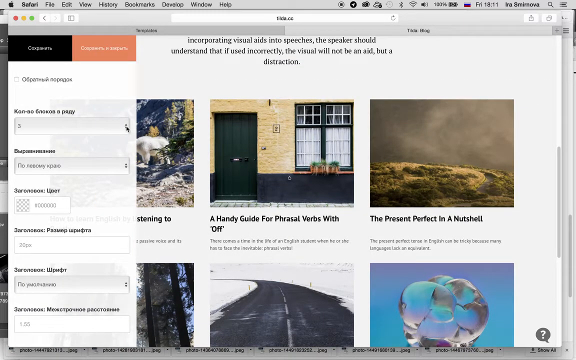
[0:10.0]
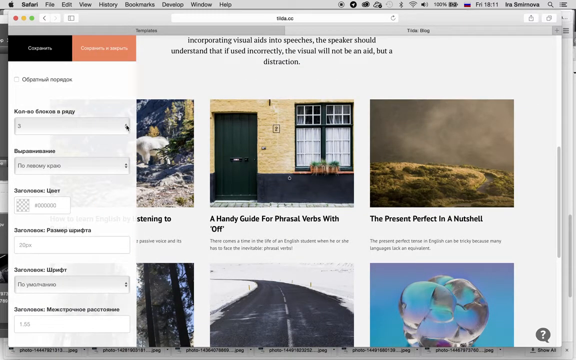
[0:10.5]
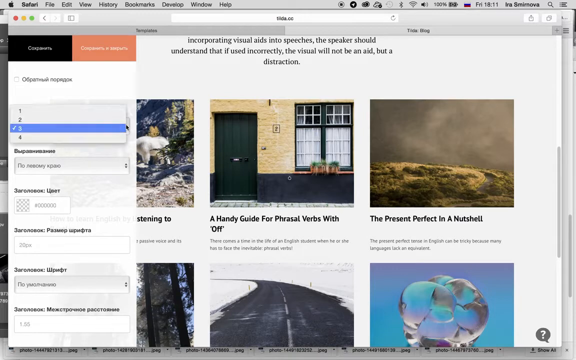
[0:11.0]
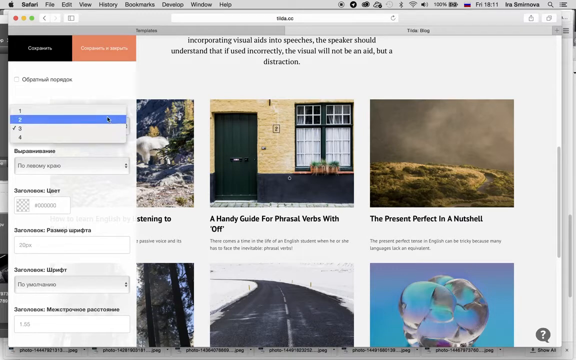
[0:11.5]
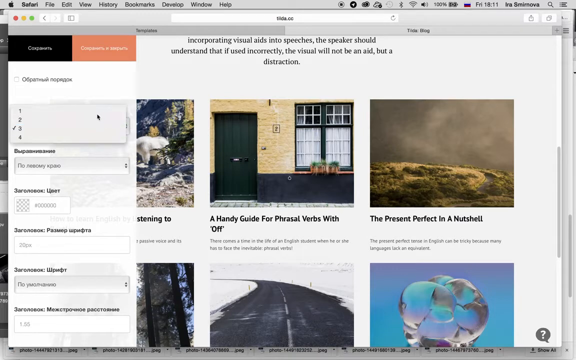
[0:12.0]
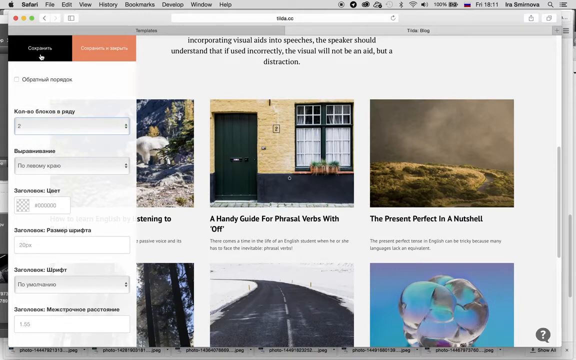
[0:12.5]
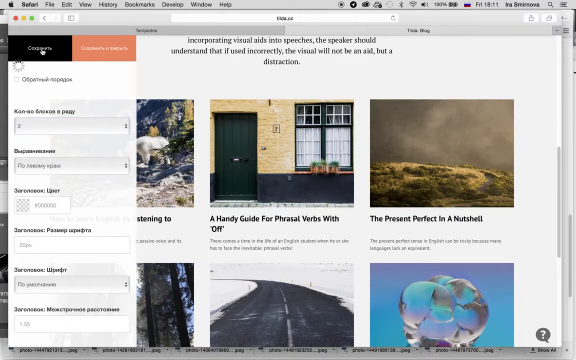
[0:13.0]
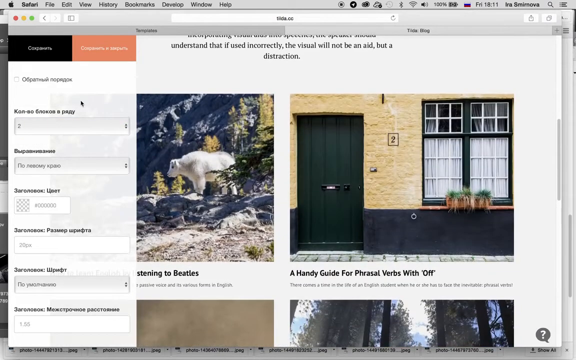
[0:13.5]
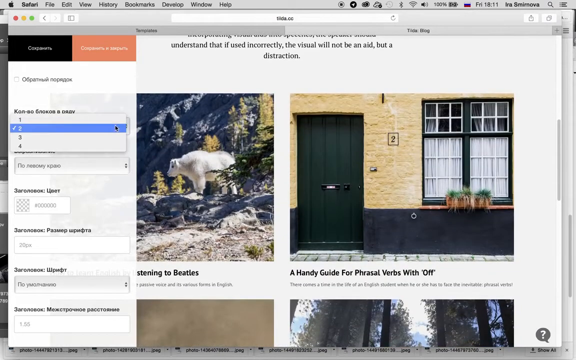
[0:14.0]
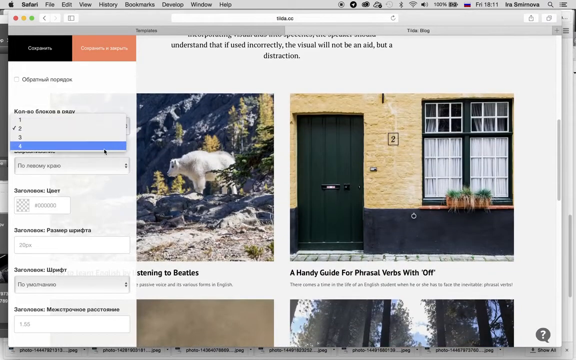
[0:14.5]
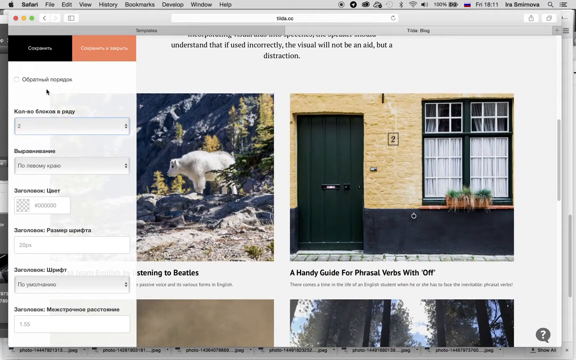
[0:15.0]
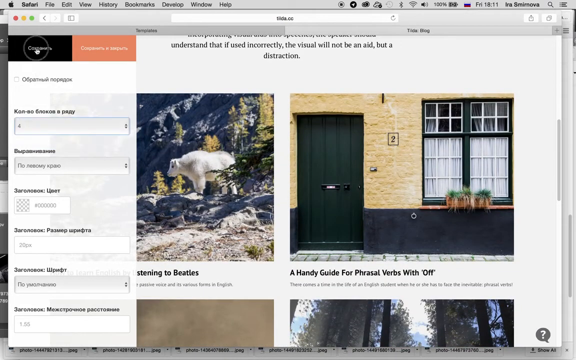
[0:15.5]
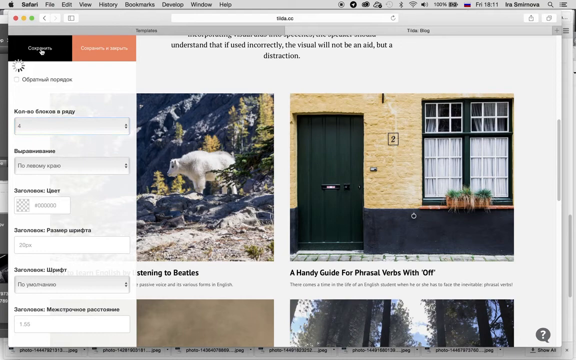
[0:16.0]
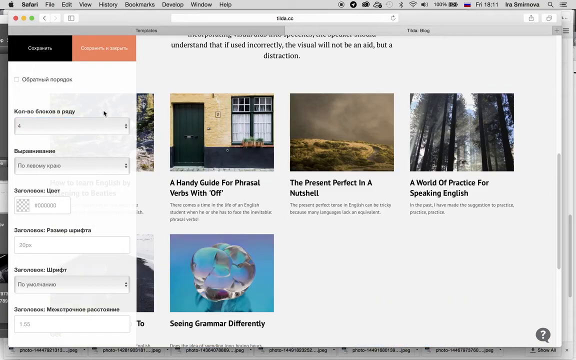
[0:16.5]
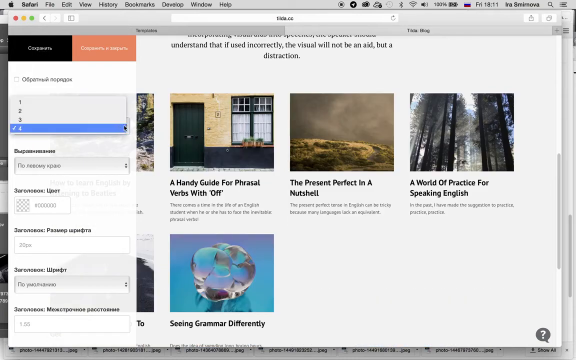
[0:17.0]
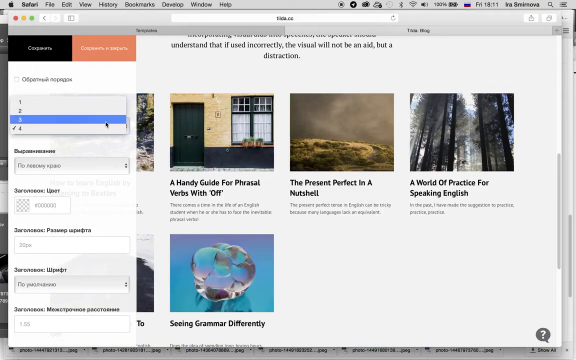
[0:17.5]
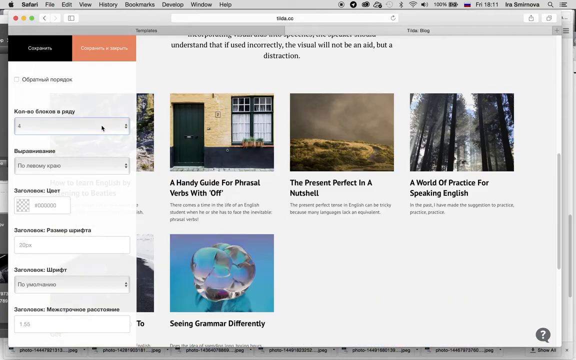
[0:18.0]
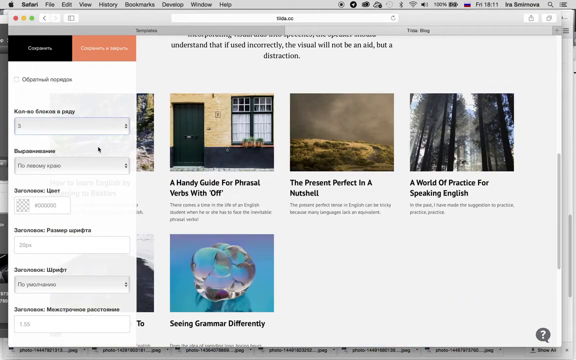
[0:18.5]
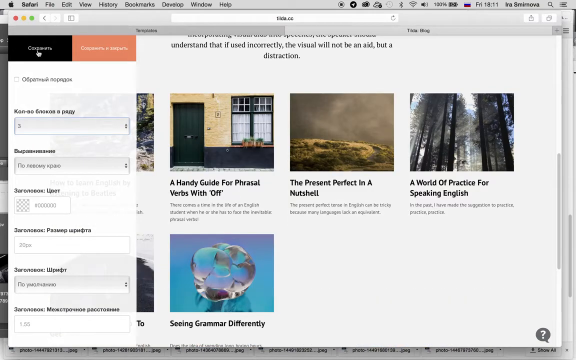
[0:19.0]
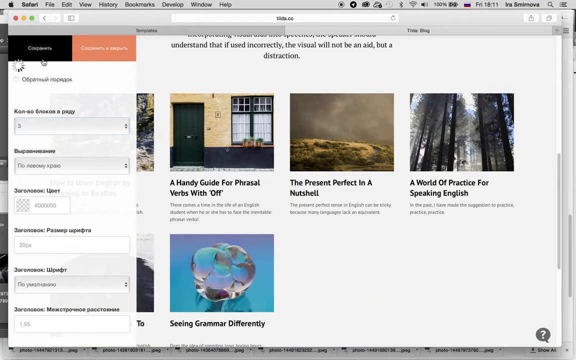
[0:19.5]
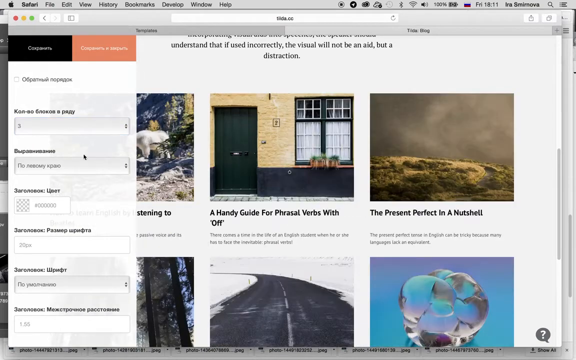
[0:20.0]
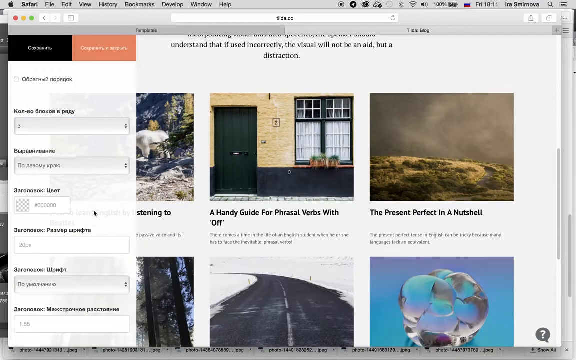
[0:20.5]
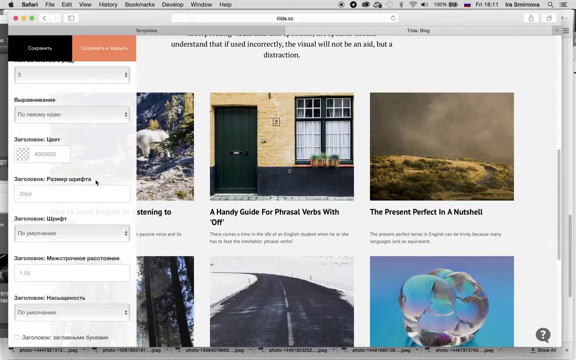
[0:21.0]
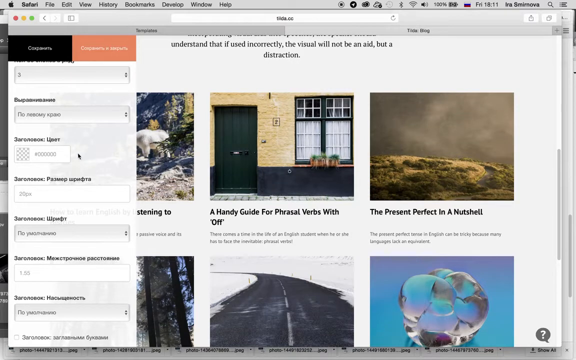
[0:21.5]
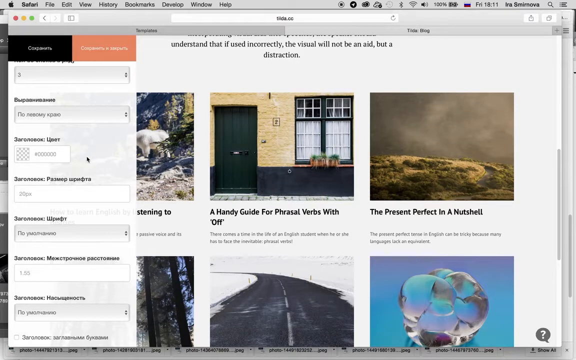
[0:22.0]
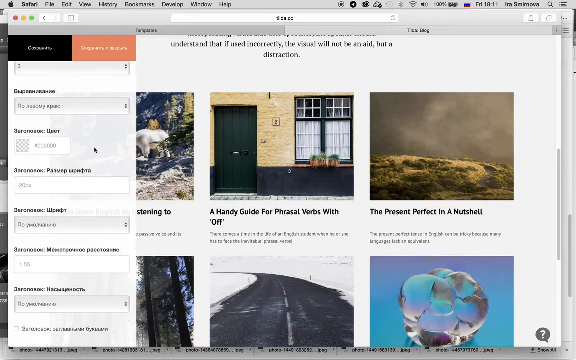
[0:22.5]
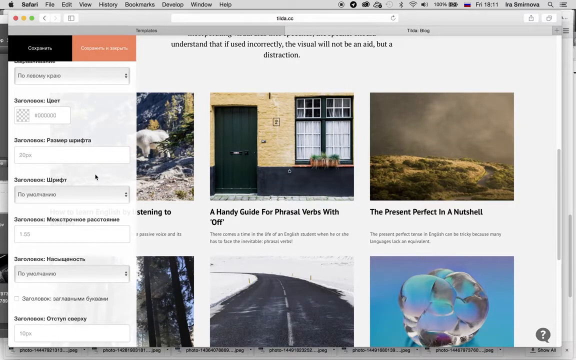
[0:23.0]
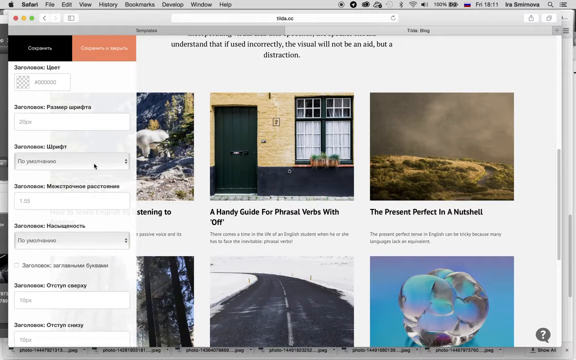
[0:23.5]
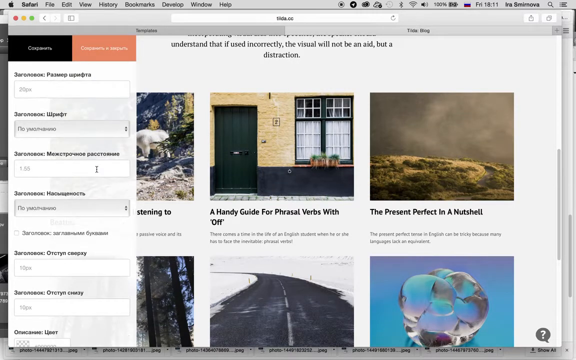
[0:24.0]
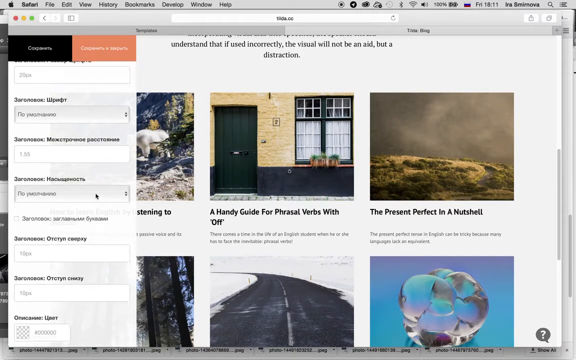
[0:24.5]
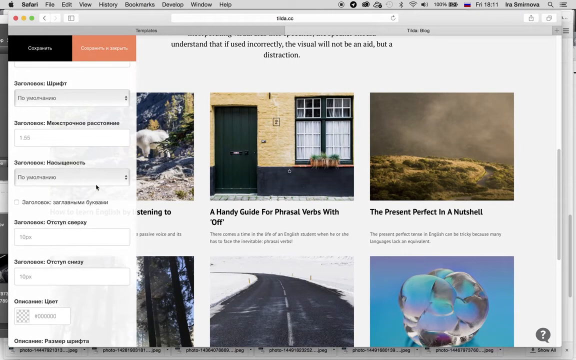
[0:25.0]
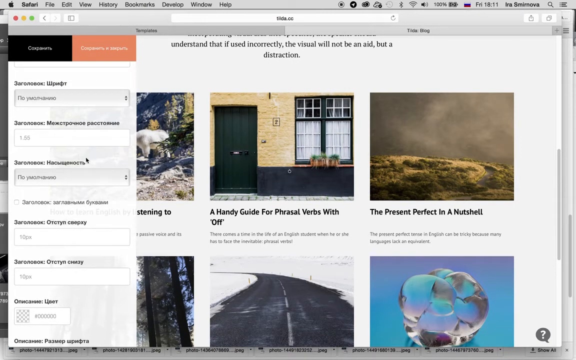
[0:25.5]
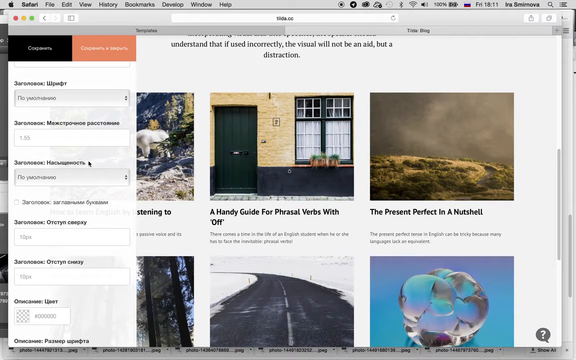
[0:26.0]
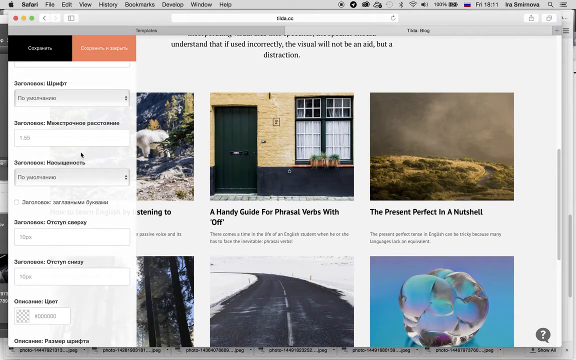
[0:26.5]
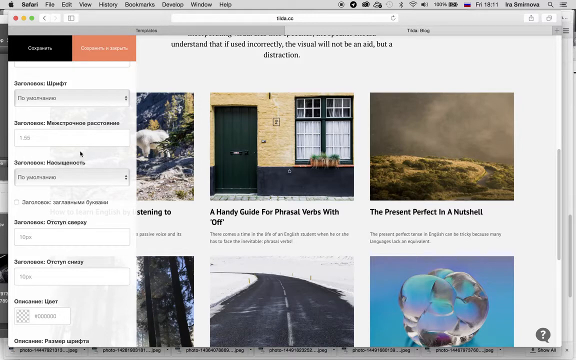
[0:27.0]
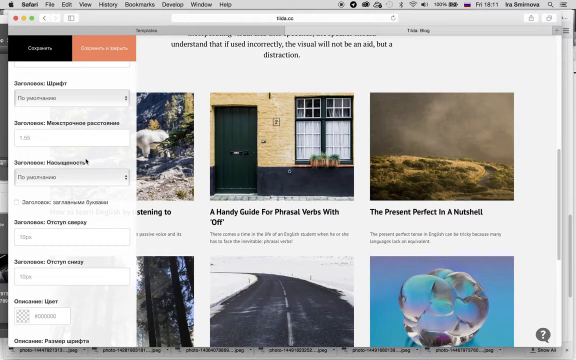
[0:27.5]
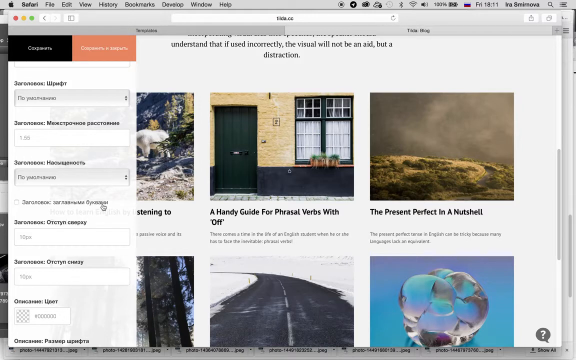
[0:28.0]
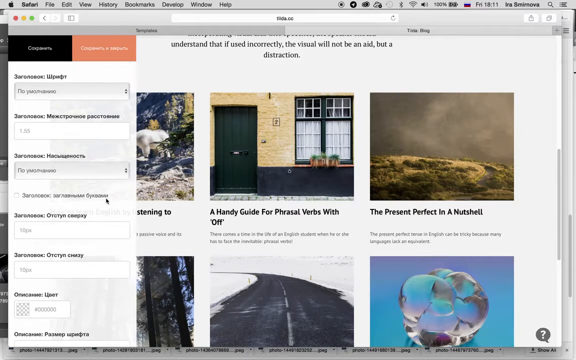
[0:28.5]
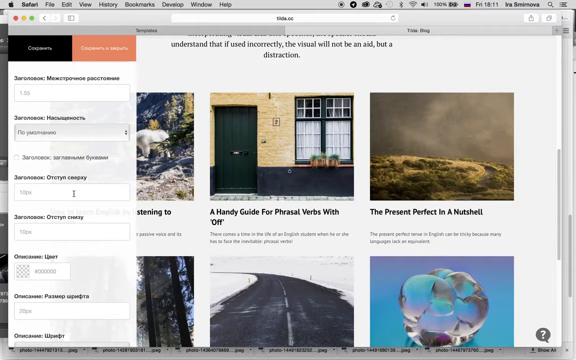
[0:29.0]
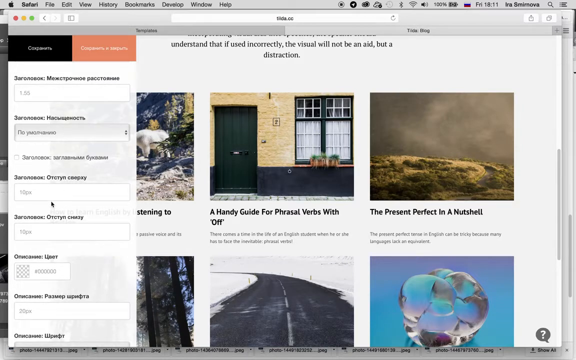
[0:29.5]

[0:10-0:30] The same interface or website is shown, now with a filter menu popped up that contains what looks like Russian characters. One of the subjects shown in a window is "a handy guide for phrasal verbs with off", with a picture of what looks like a house or residence in the UK, or some kind of building. It has a forest green door, and the bottom of the building has the same forest green tint. The bricks are a yellowish cream color. There are two windows with forest green borders or frames, and white curtains in the windows. Another subject is "the present perfect in a nutshell", which shows what looks like a landscape photo, maybe of a desert or some arid landscape. A road runs through the landscape, and the sky above looks maybe like dusk, or a storm in the distance, or hazy.